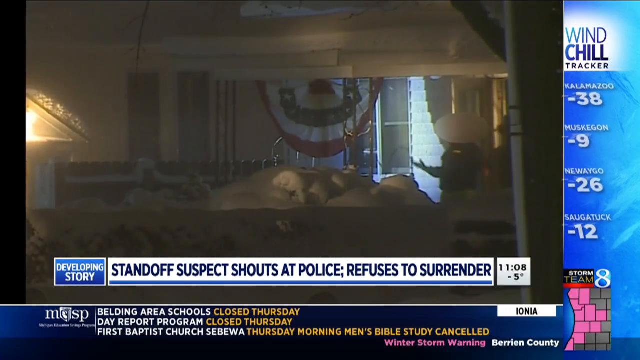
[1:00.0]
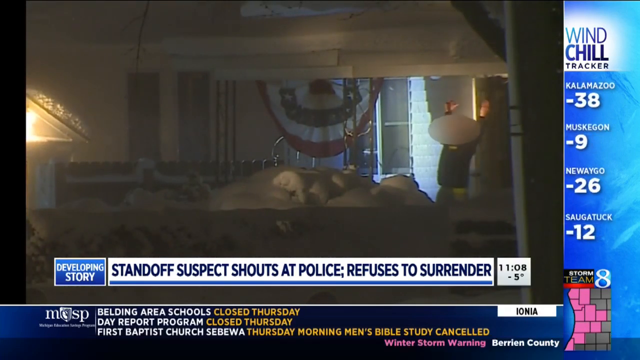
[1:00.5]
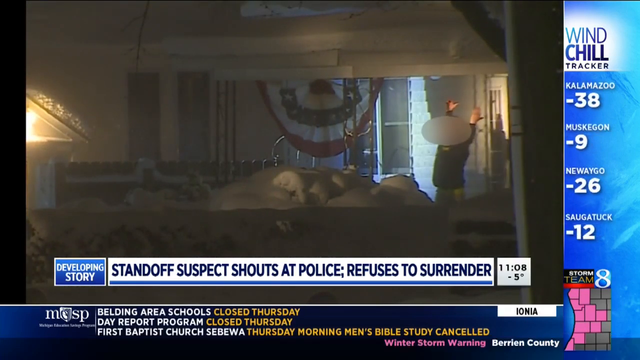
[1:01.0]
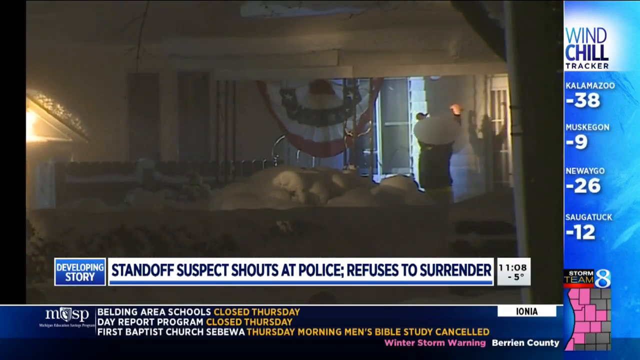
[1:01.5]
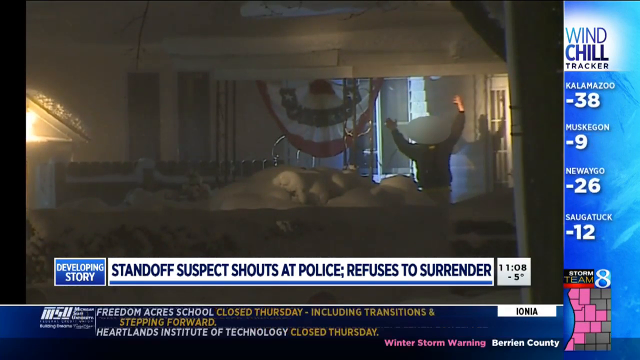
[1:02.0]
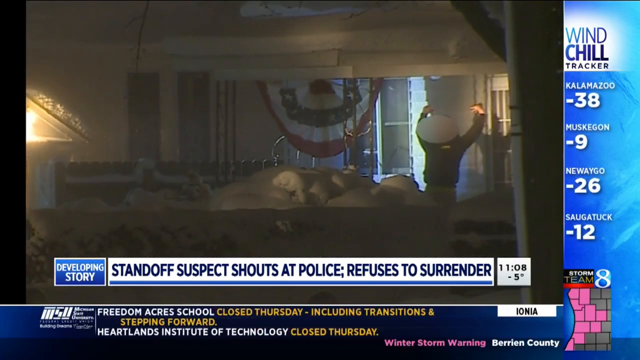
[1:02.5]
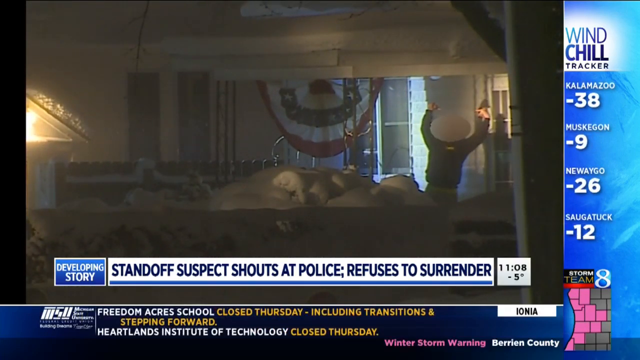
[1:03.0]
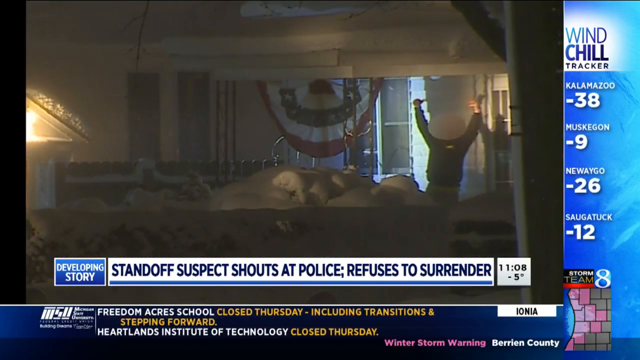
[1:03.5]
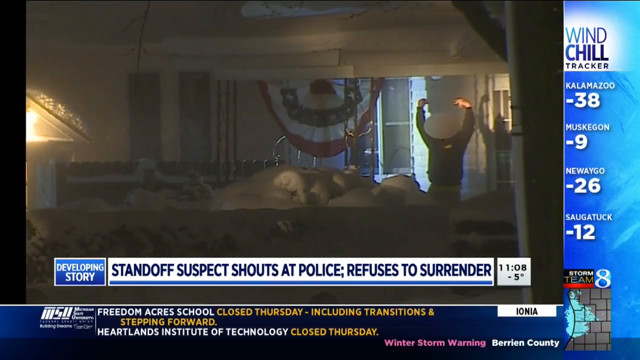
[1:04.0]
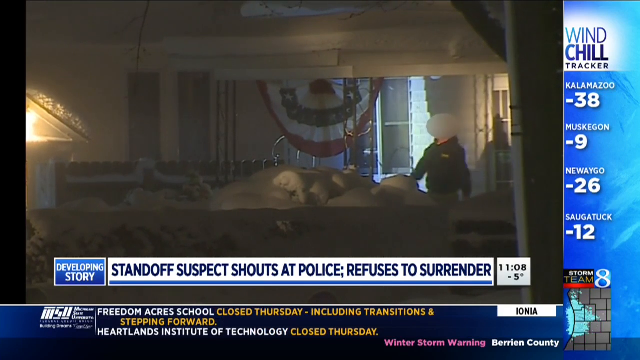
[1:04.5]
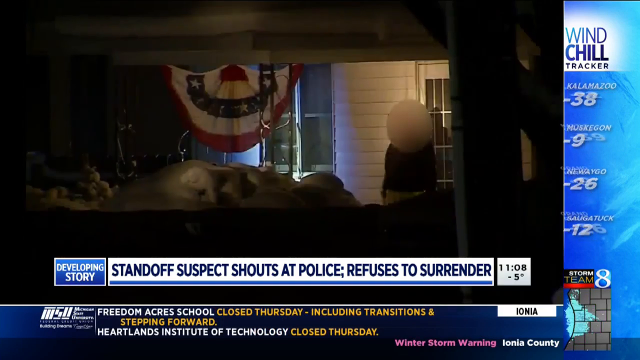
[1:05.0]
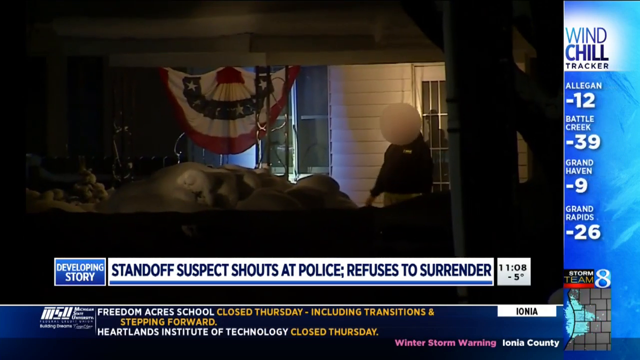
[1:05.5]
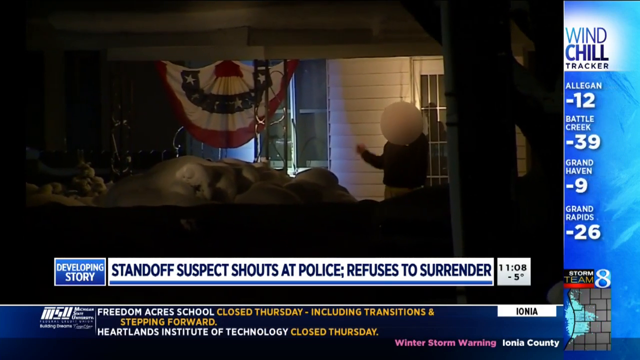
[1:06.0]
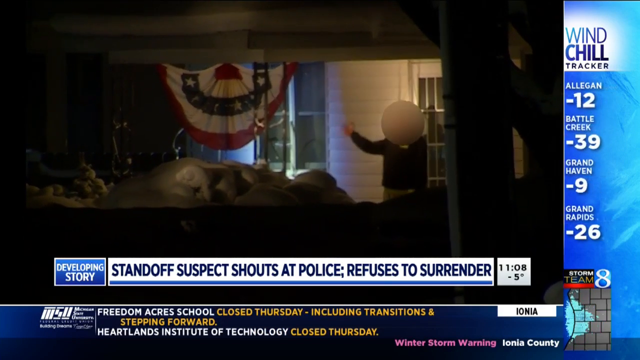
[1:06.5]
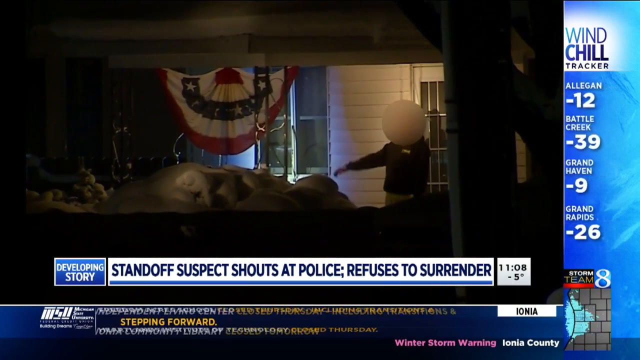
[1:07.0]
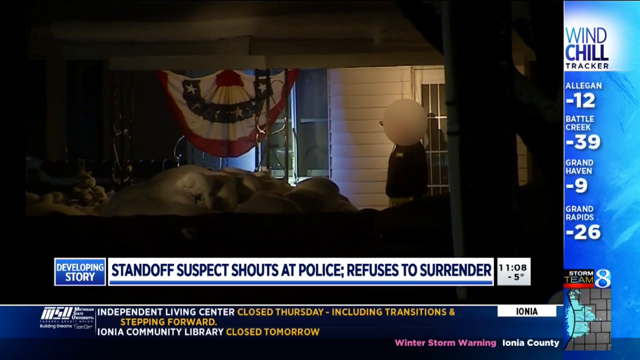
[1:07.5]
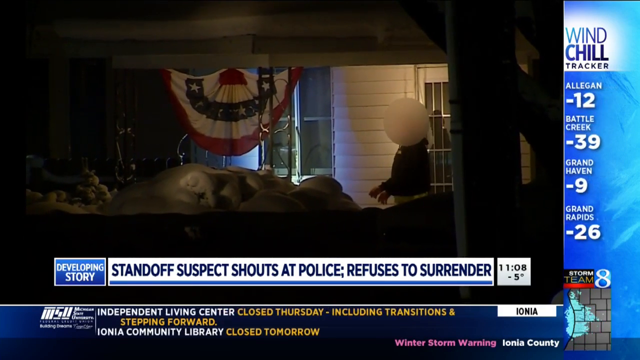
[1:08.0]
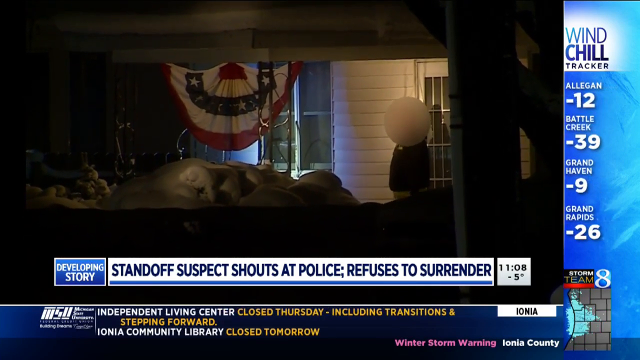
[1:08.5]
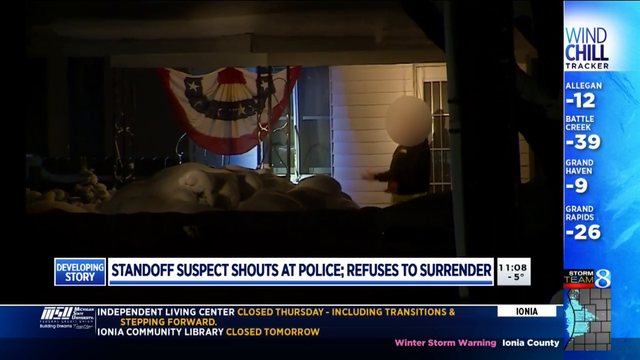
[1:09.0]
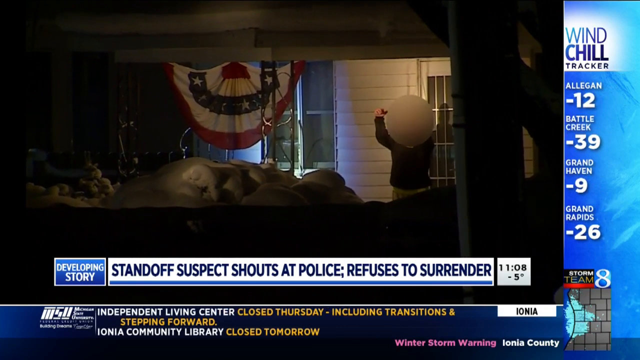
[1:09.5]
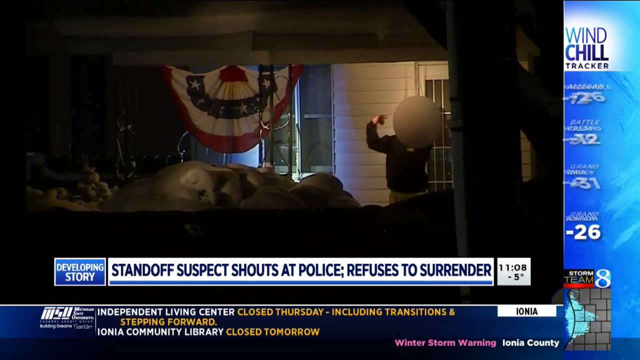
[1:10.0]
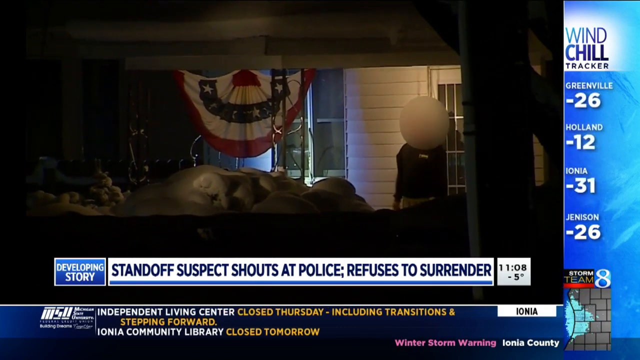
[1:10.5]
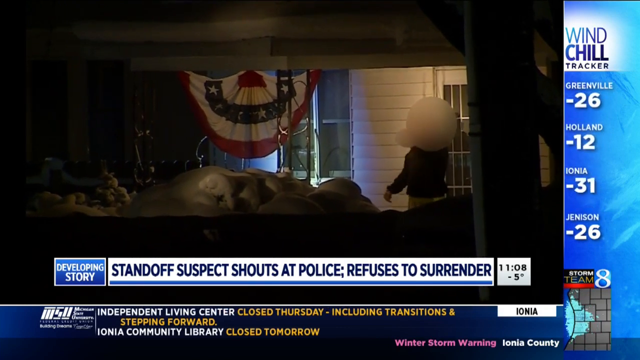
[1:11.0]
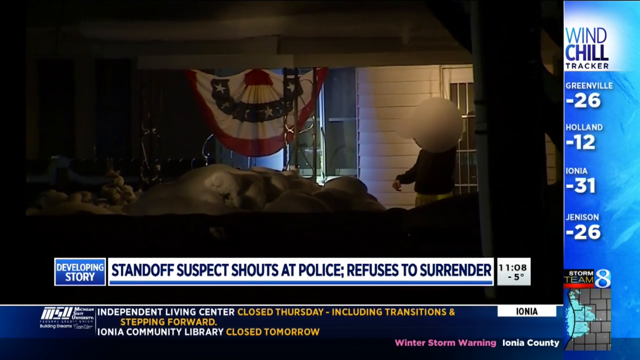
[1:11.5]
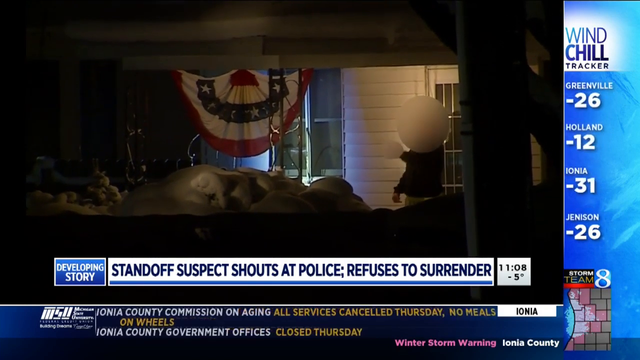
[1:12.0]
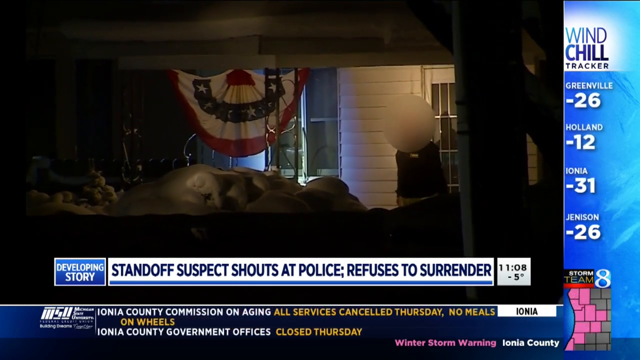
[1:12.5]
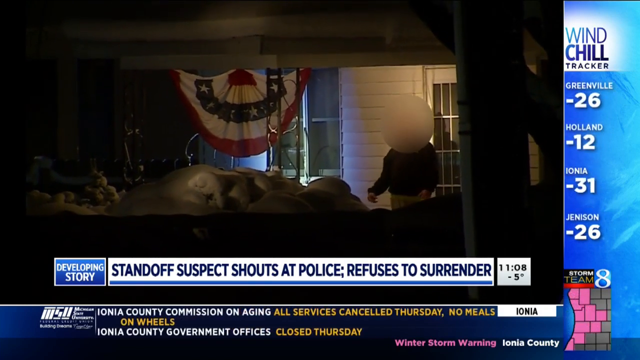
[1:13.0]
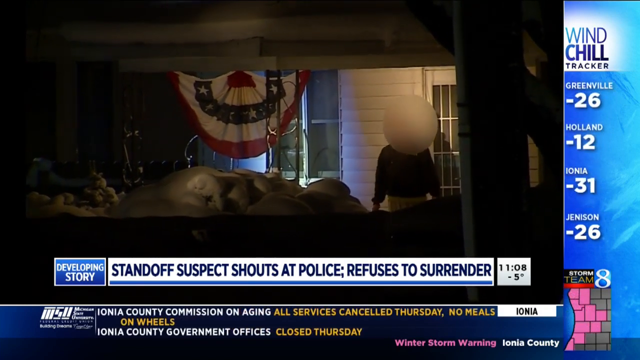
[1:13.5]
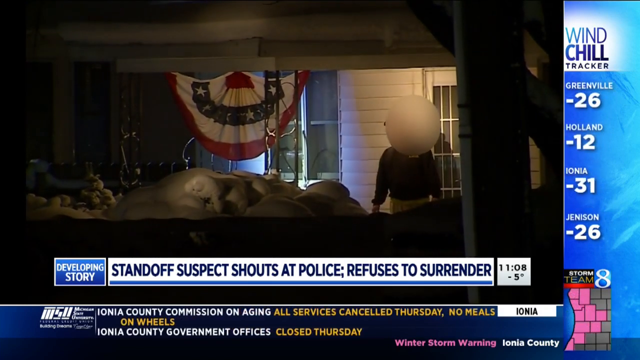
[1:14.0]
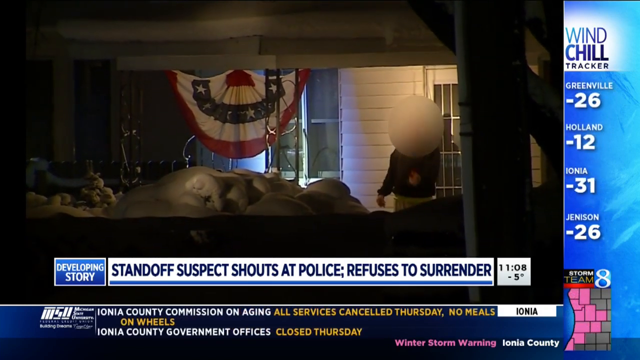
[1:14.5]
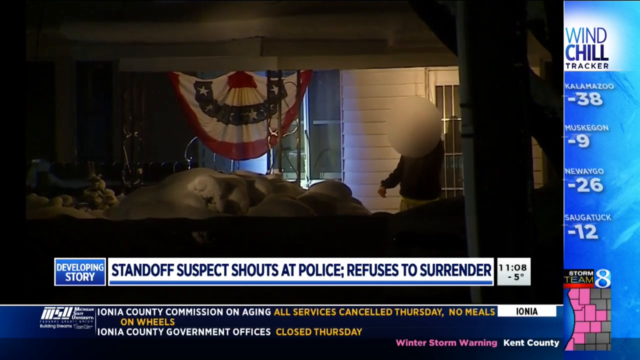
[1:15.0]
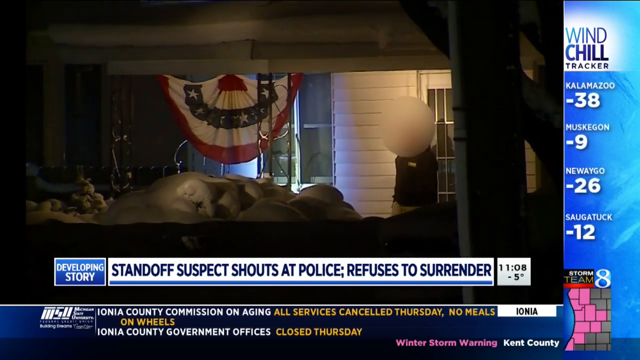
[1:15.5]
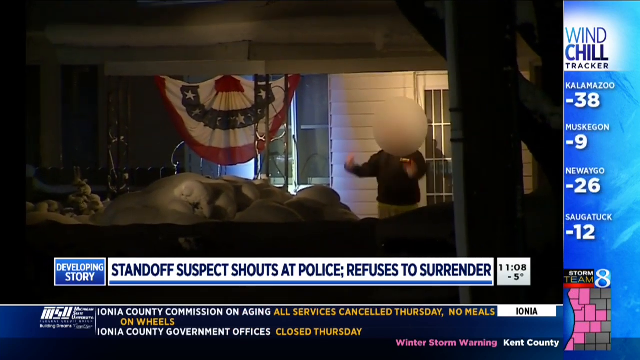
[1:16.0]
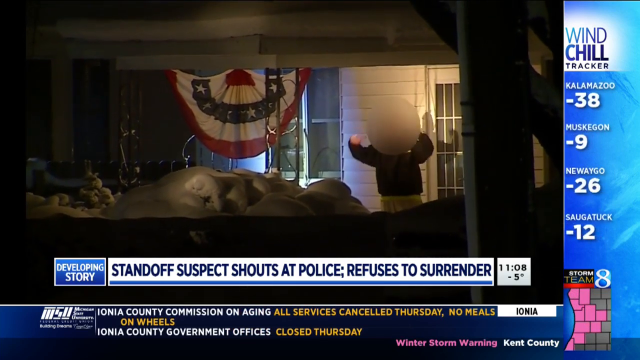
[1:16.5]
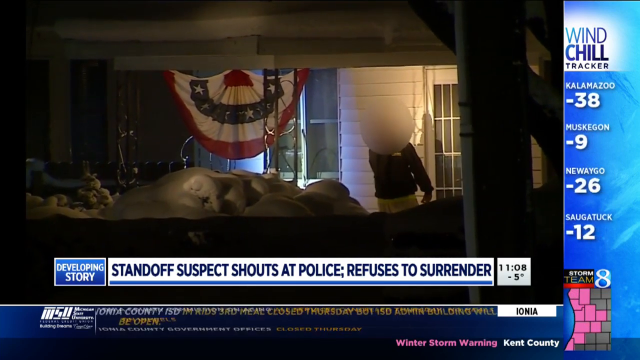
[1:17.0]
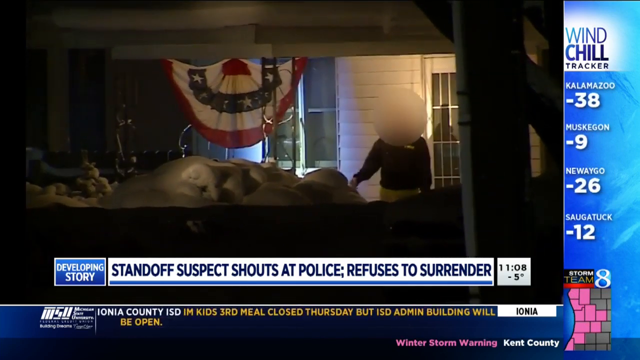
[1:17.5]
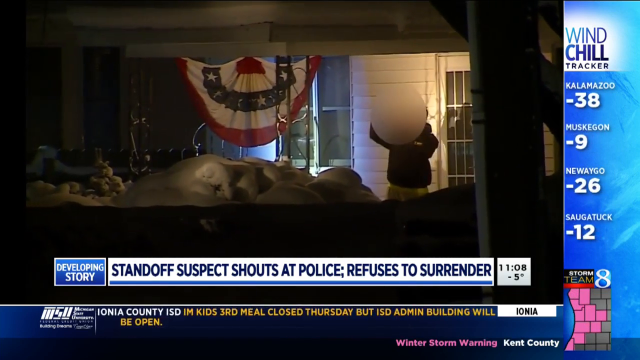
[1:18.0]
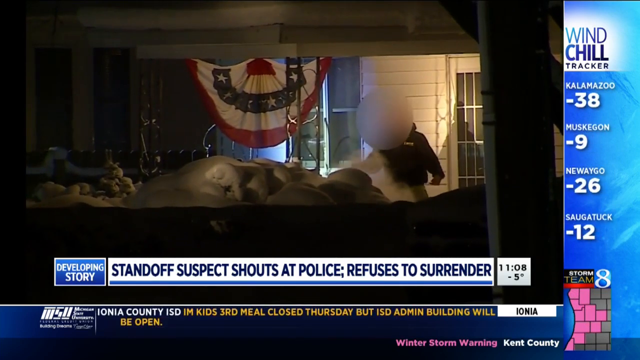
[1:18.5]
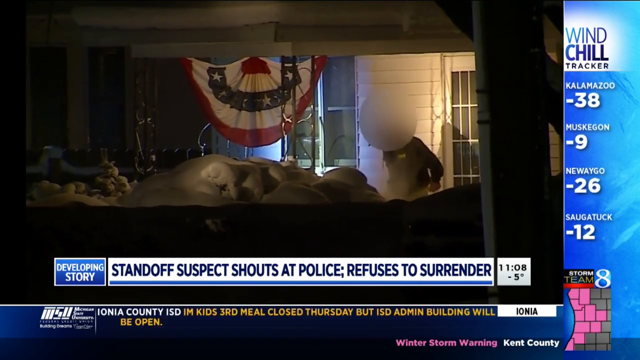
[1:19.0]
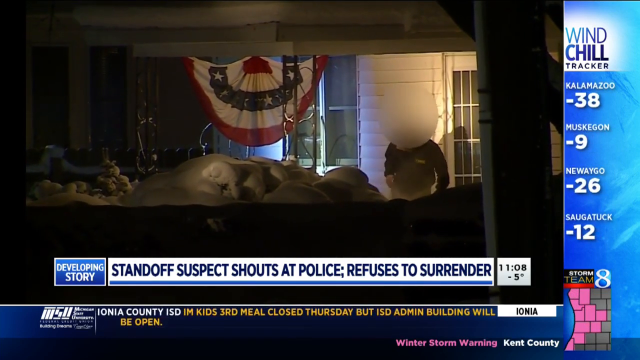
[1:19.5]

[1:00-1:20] The view into the house shows the standoff suspect with his hands in the air, as if he might be about to surrender. The headline "Development story" and "standoff suspect shouts at police refuses to surrender" is still on screen. His face is blurred, but his hands are visible; he is a Caucasian man wearing a black sweatshirt and possibly lighter-colored pants. A door, the flag, a lamp and maybe the back of a couch are visible, possibly a shot through a window, and to the left there appears to be another door. With his hands up, he seems to touch the wall, waves his hands a little and slams them down at his sides. Another, darker shot shows him apparently standing outside at a door, with what seems to be an outside light on, and the interior items possibly a reflection. He moves a lot, throwing his hands up in the air quickly and back down again. His hands are small in the distance and somewhat blurred, but from the way his fists move he apparently flips off the officers.